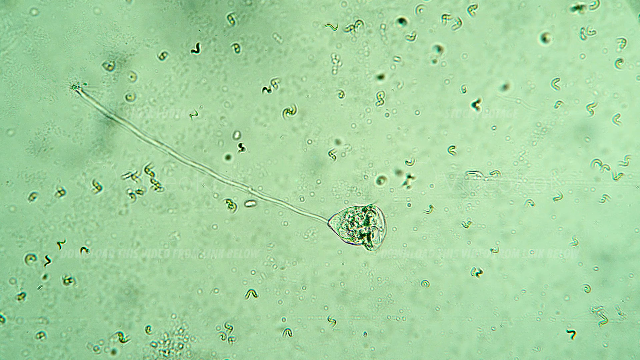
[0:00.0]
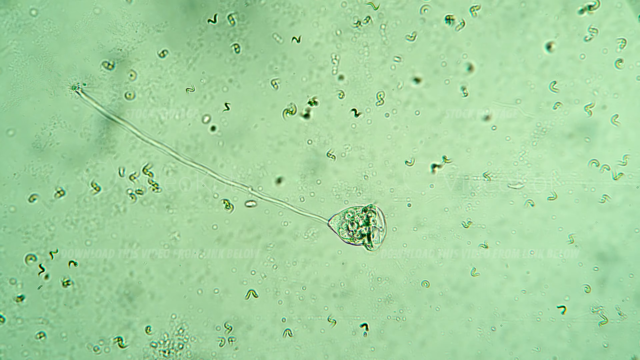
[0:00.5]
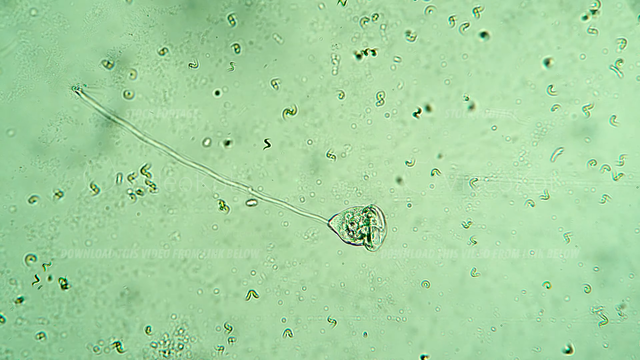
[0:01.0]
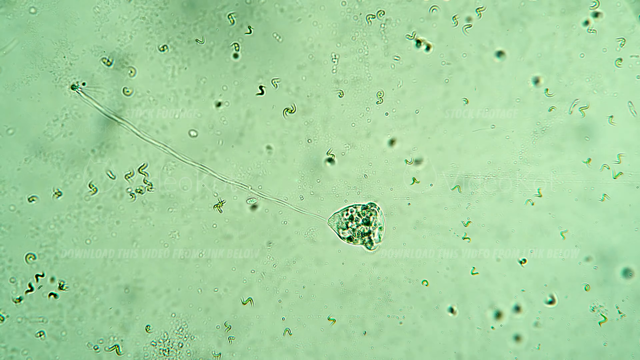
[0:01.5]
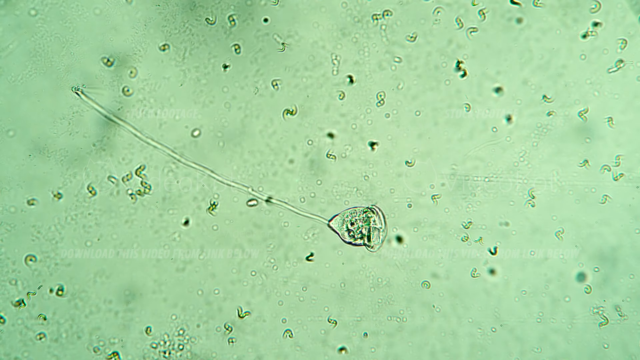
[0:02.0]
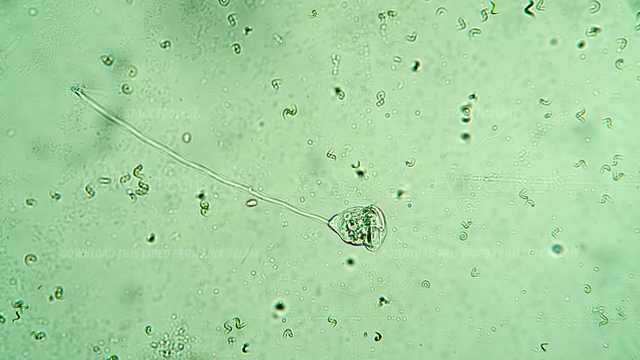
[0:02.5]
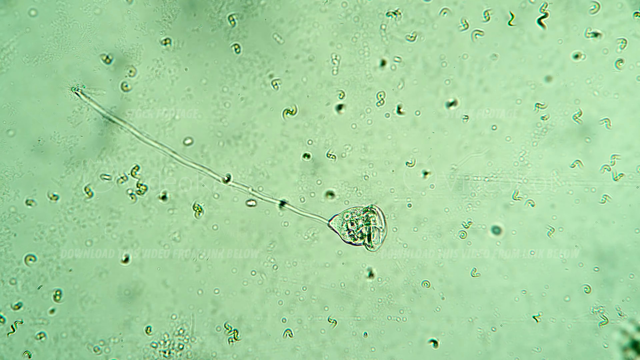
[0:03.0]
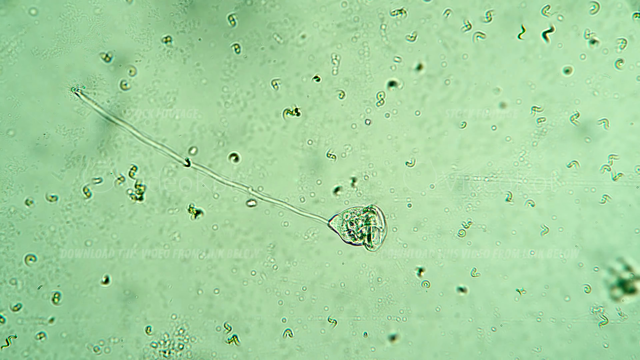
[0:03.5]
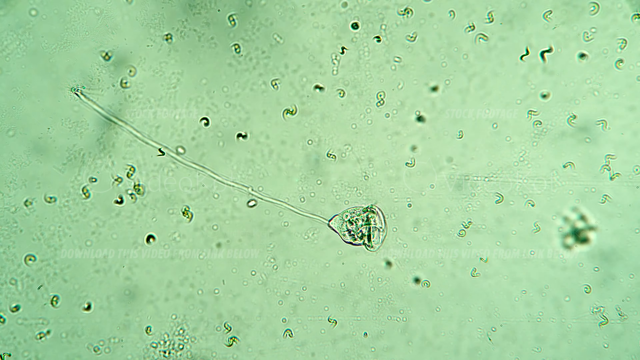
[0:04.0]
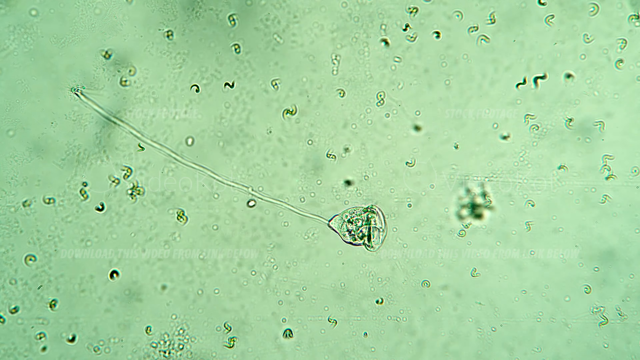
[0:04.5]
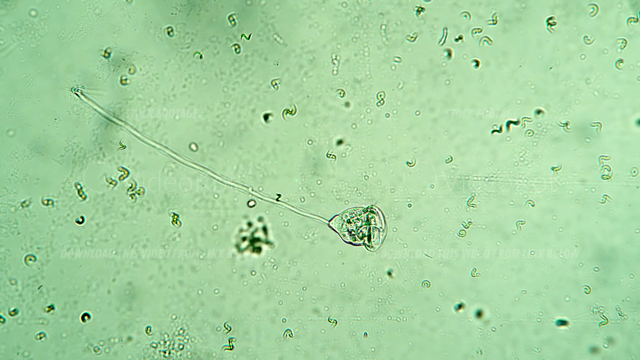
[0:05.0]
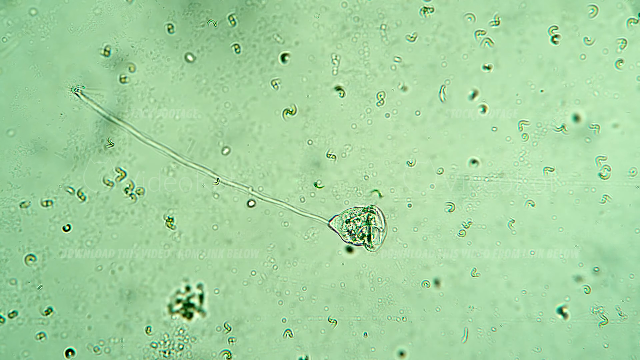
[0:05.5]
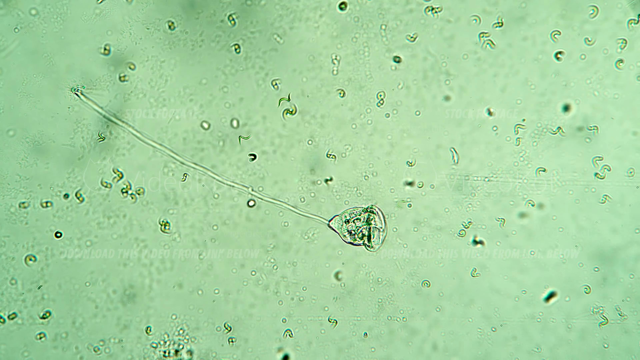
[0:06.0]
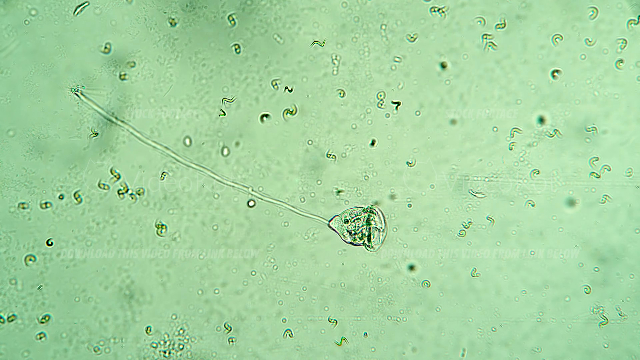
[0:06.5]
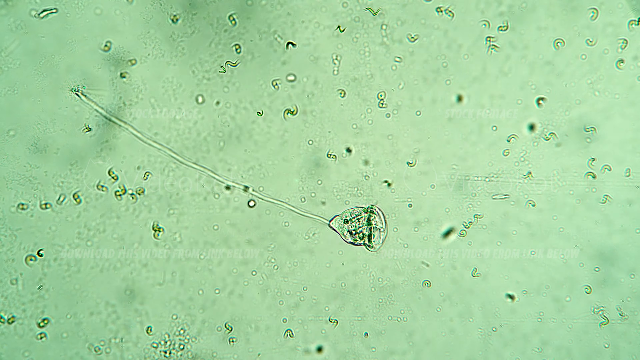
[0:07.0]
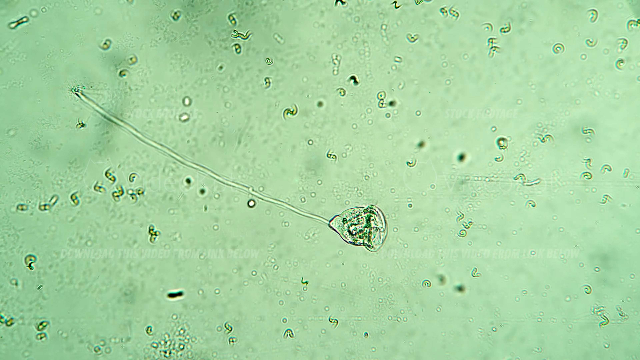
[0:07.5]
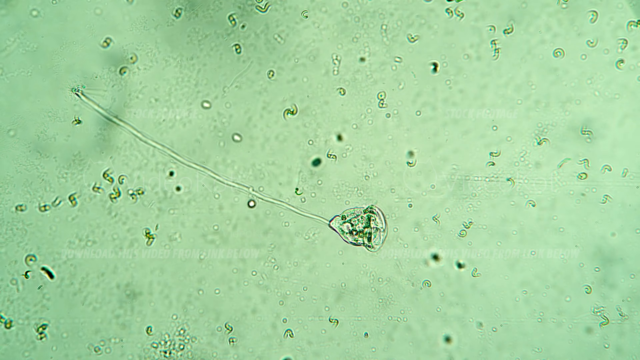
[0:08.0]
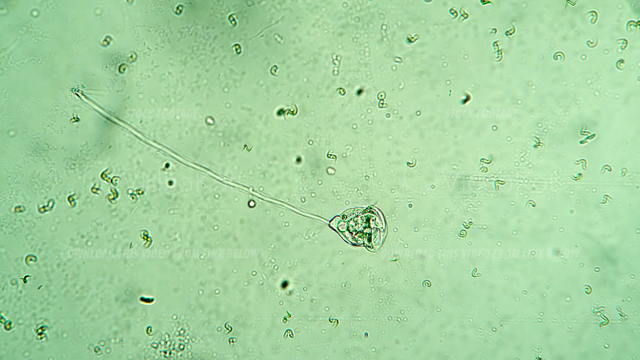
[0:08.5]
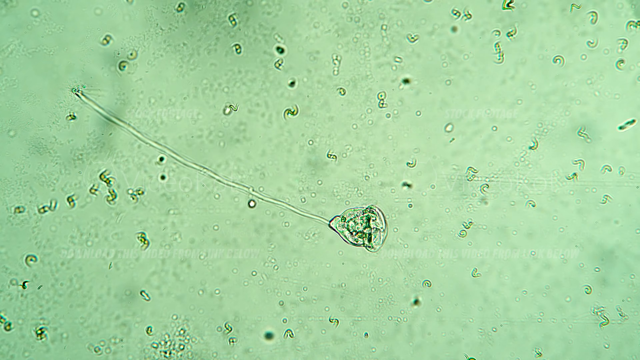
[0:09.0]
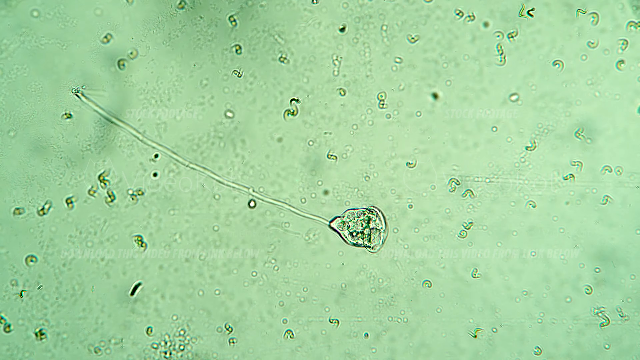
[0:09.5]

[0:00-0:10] What appears to be something in a petri dish is viewed under a microscope. One changing thing is in the center bottom of the frame, with a very long tail attached to it. Its form changes, with little pieces inside it moving. All sorts of little things swirl around it, as if a drop had just been put into the petri dish and the current is causing them to swirl. A couple of things wiggle as though moving under their own power, but everything else looks like it is moved by the current. The thing being studied, an amoeba or something else, has a long tail.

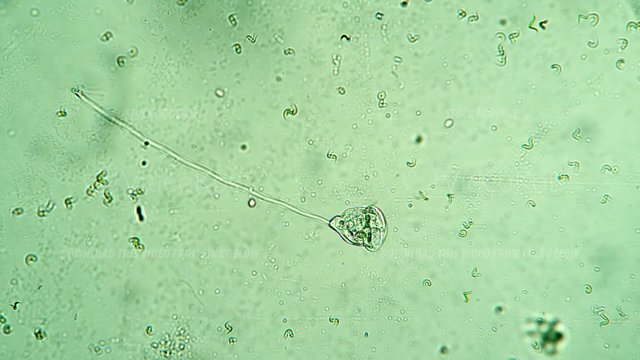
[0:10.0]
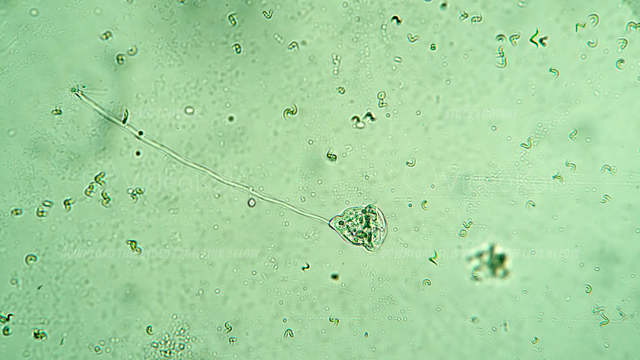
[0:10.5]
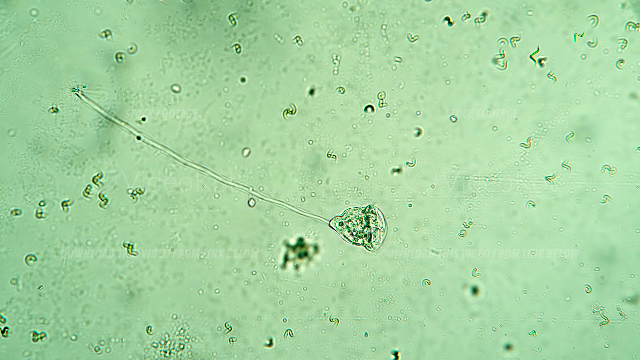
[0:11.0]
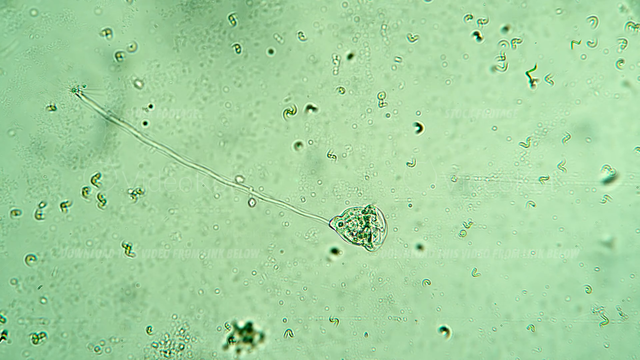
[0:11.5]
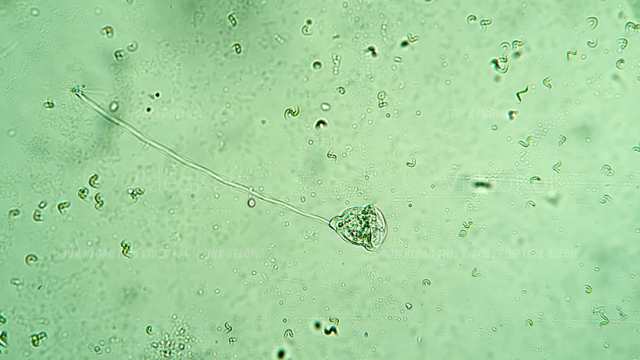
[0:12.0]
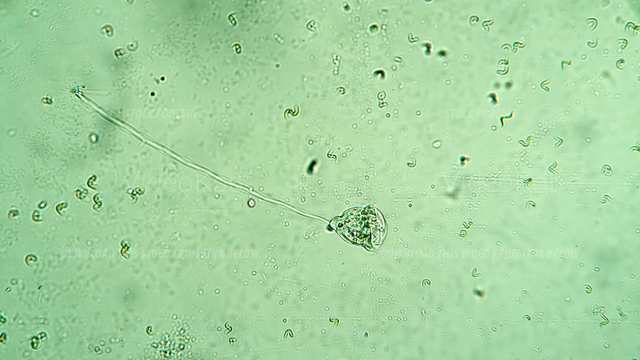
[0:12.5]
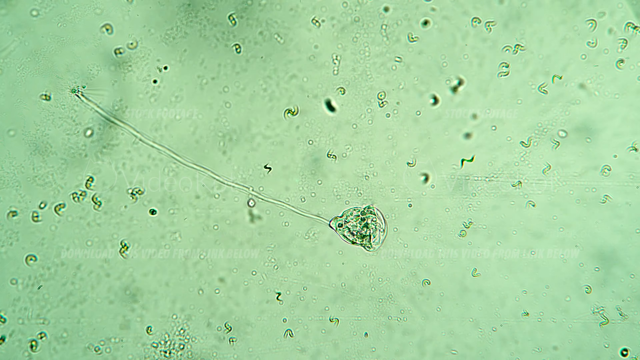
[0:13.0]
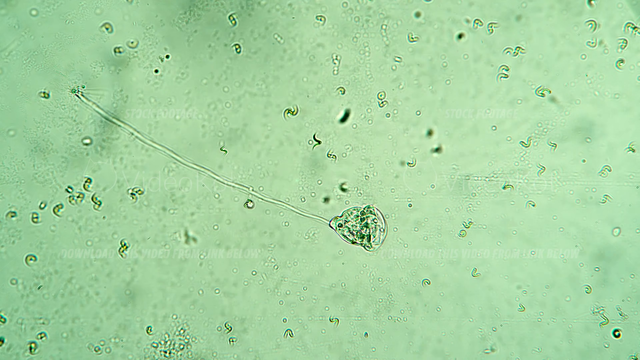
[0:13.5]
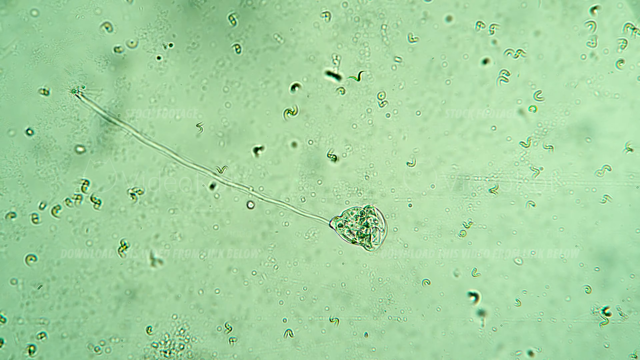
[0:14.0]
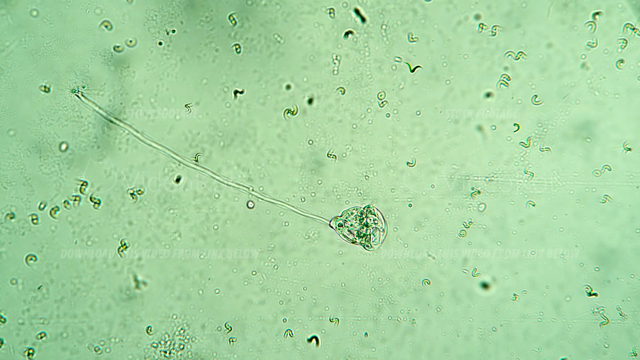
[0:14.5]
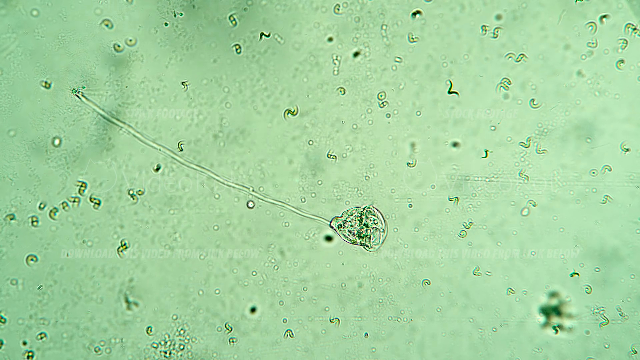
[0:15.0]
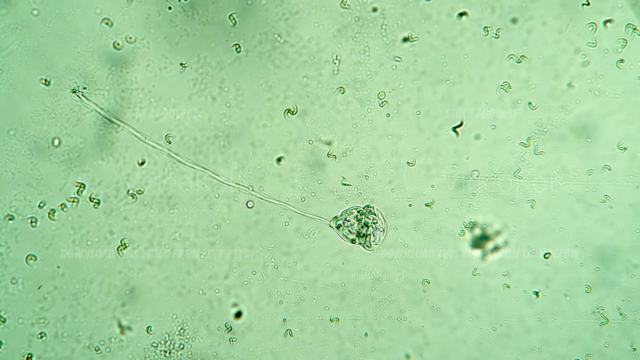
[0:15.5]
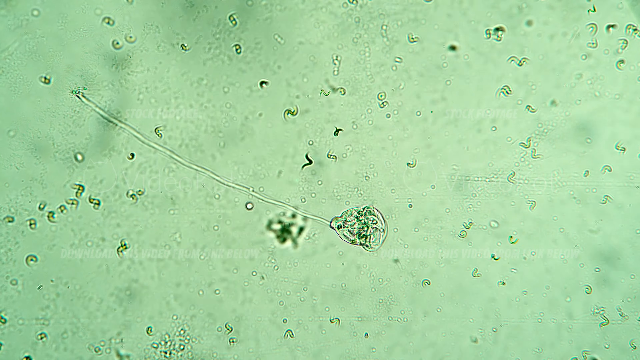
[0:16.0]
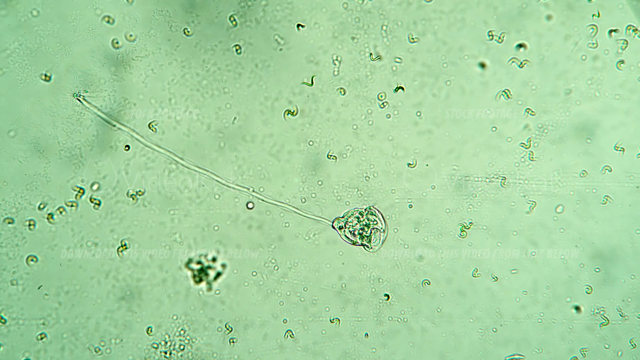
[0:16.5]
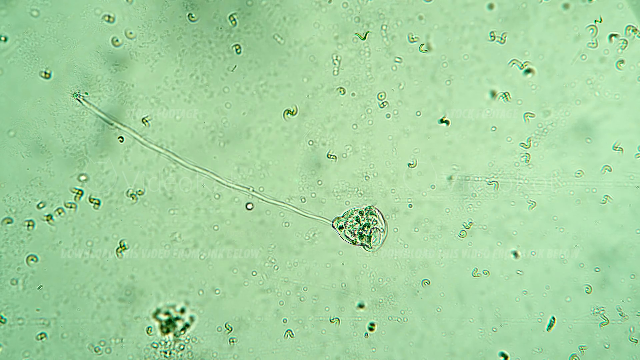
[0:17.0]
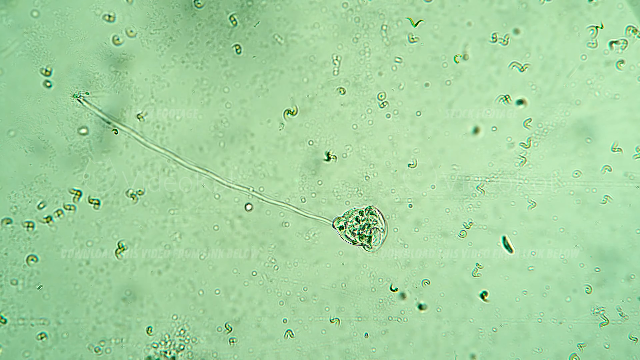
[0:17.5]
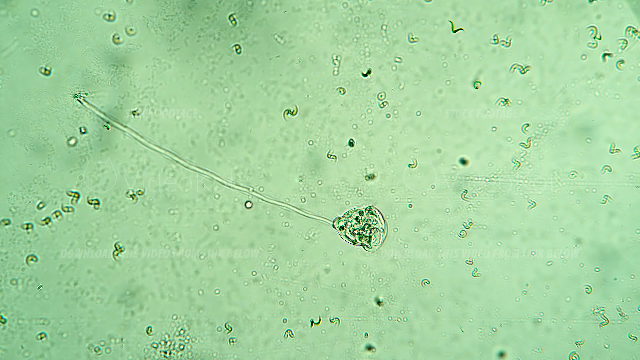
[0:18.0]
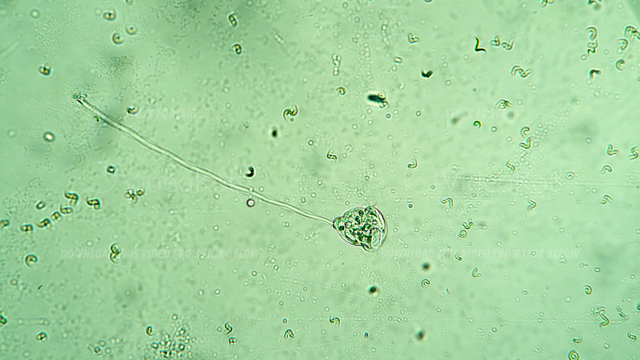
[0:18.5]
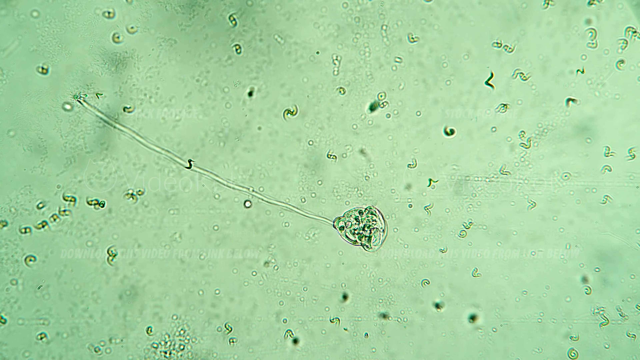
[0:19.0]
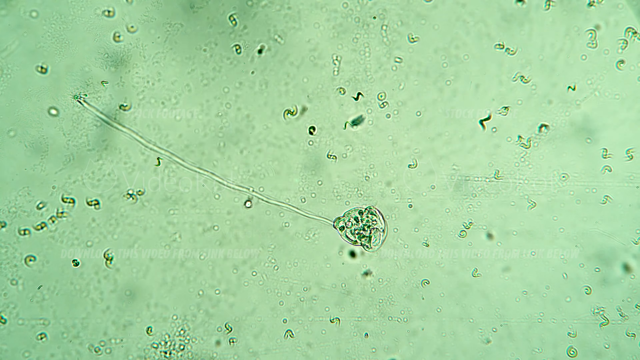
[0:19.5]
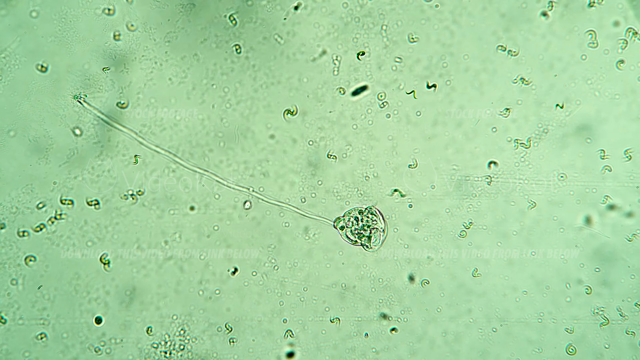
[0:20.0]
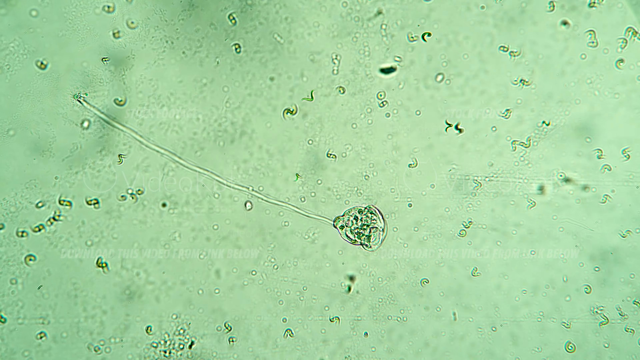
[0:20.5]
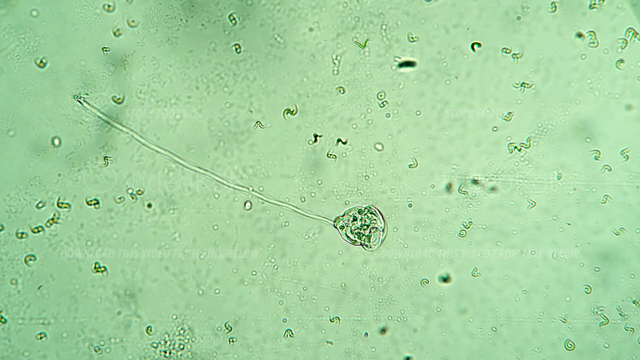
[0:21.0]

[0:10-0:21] The subject under the microscope, in a petri dish or similar, is kind of a pale green color. It looks almost like a horseshoe crab but has a very, very long tail, and it is the largest thing visible under the microscope. Lots of other little things appear to swirl with a current, as if something had been dropped into the petri dish, causing the fluid to move. Little tiny specks, however, appear to be swimming or moving on their own. None of it is identified.